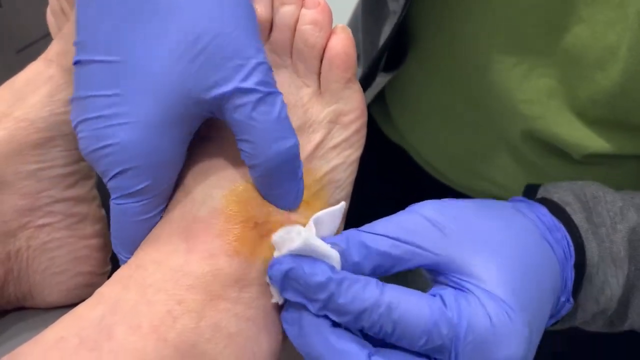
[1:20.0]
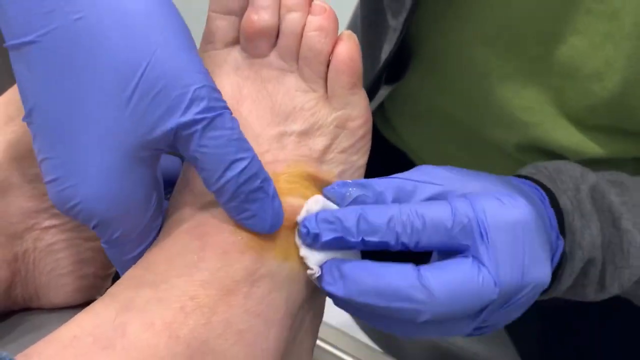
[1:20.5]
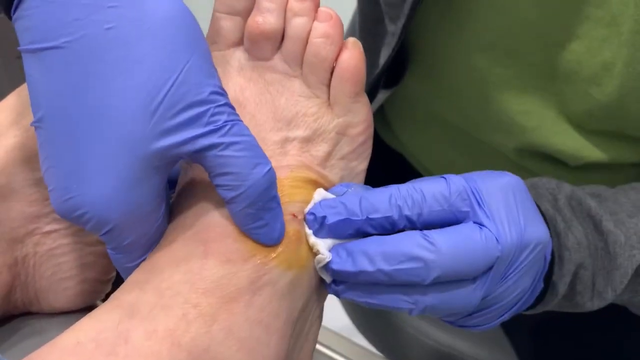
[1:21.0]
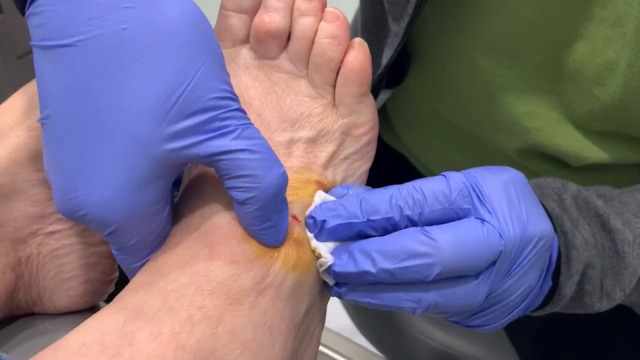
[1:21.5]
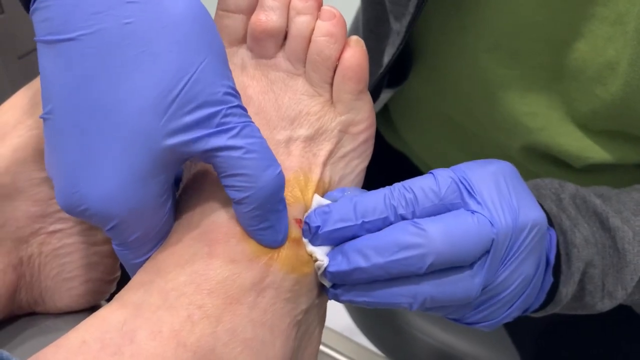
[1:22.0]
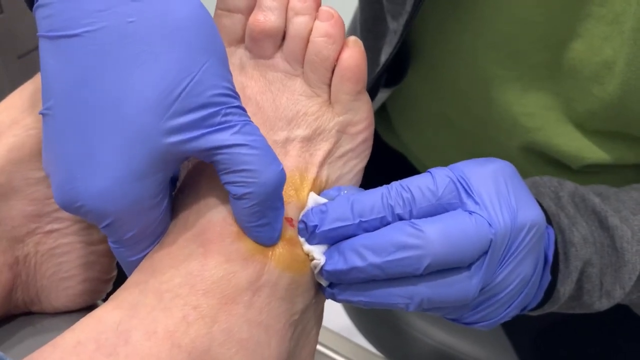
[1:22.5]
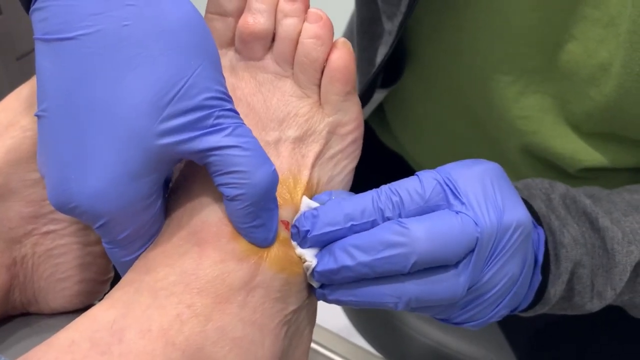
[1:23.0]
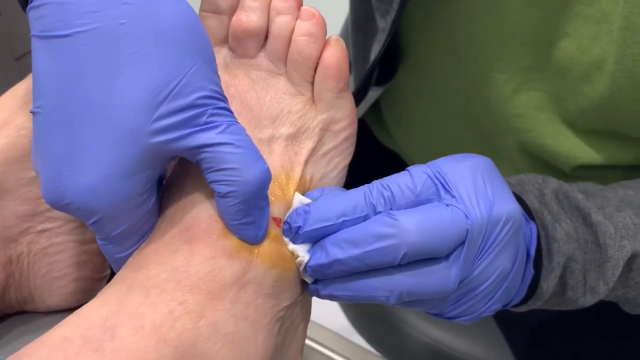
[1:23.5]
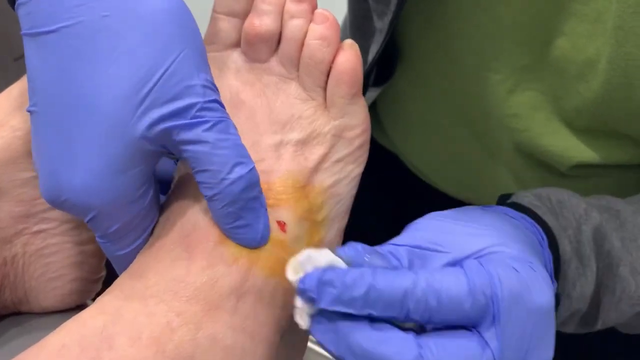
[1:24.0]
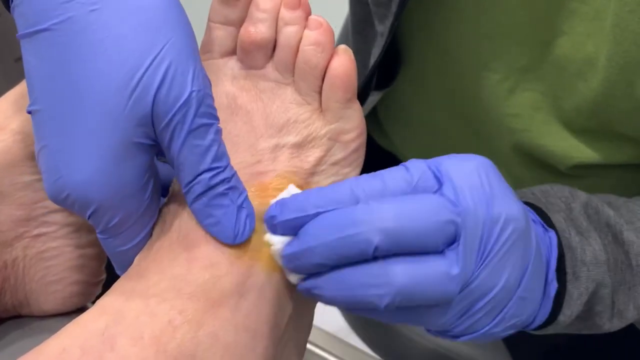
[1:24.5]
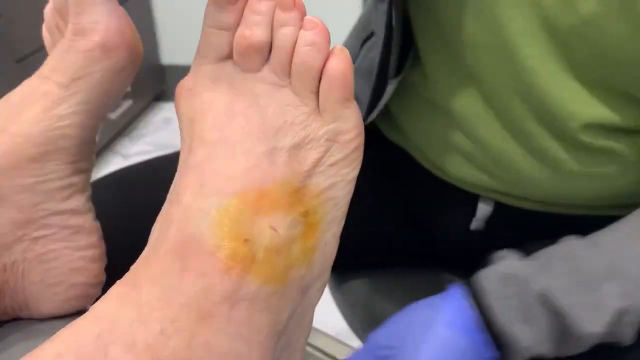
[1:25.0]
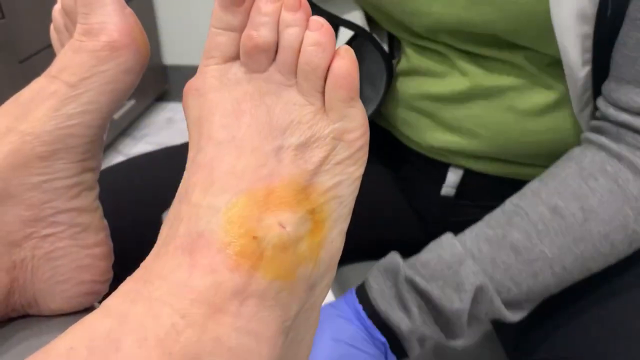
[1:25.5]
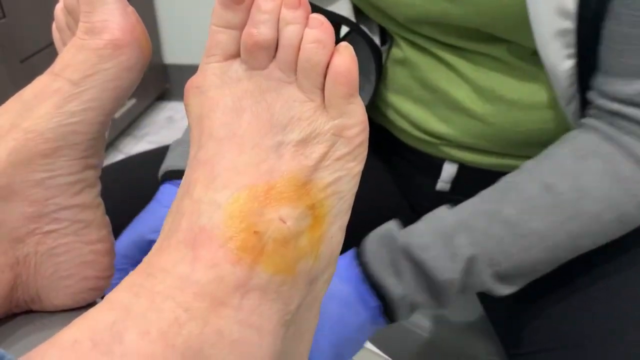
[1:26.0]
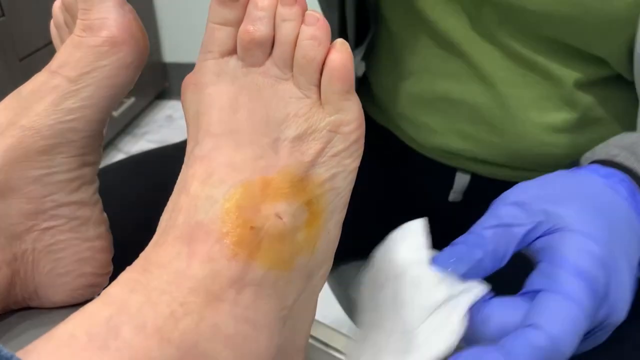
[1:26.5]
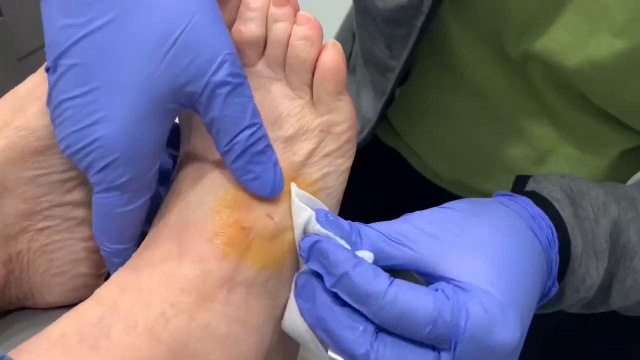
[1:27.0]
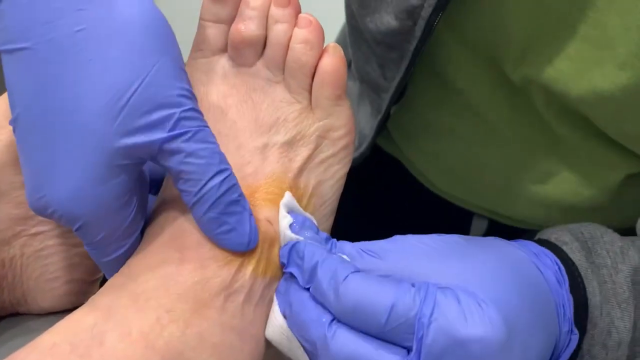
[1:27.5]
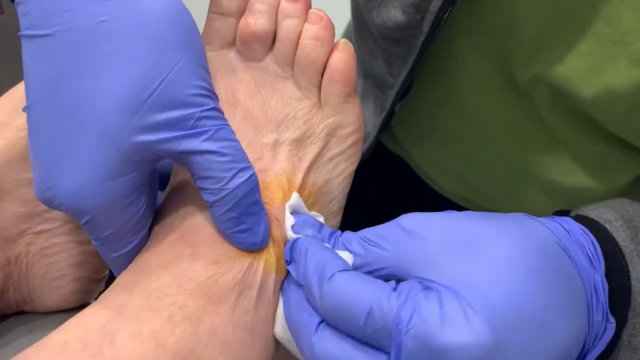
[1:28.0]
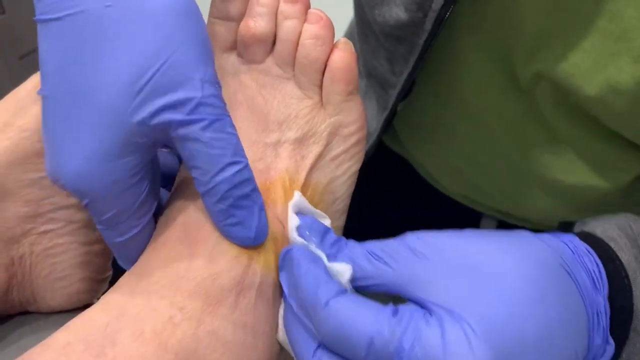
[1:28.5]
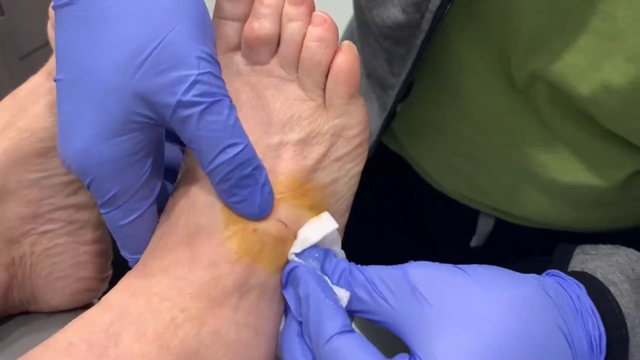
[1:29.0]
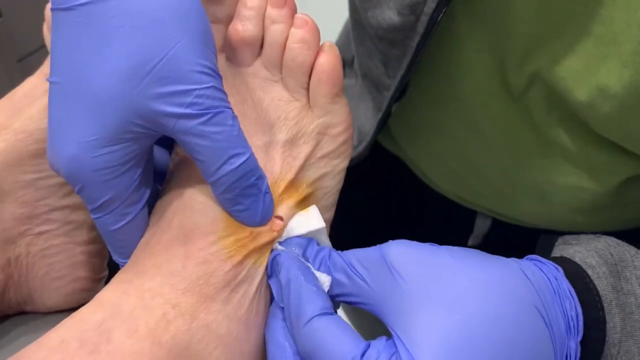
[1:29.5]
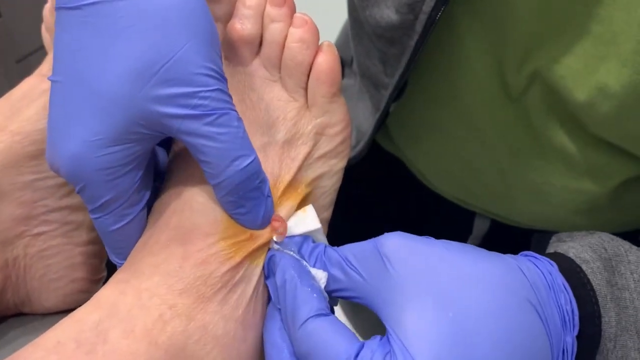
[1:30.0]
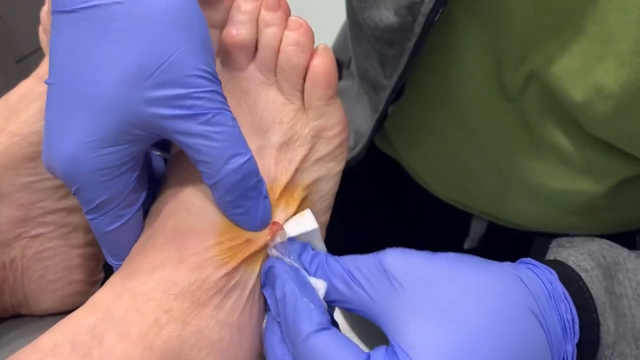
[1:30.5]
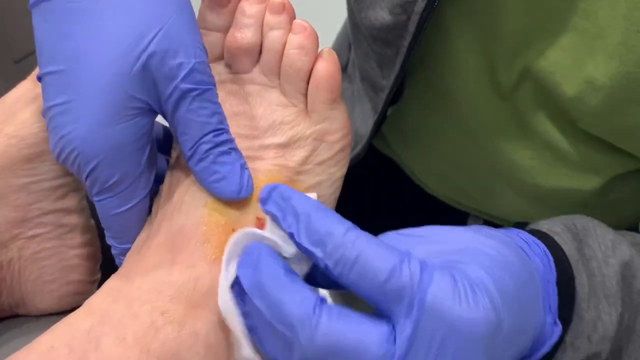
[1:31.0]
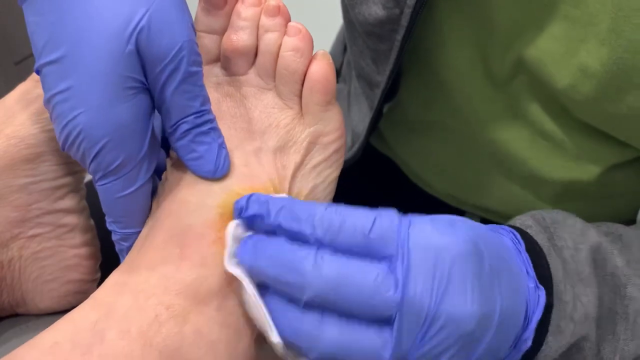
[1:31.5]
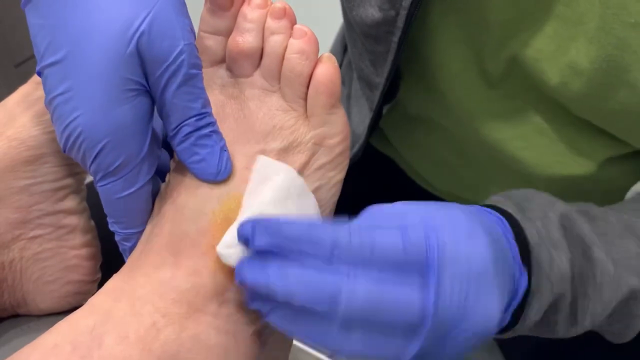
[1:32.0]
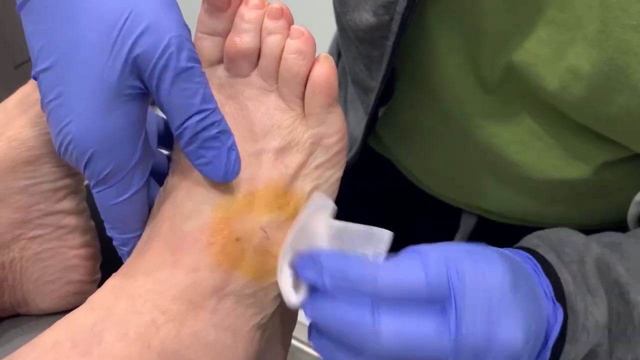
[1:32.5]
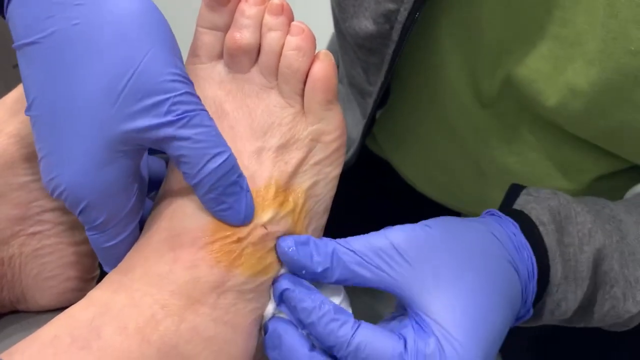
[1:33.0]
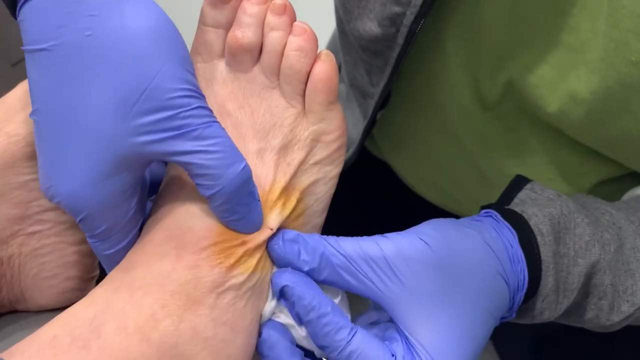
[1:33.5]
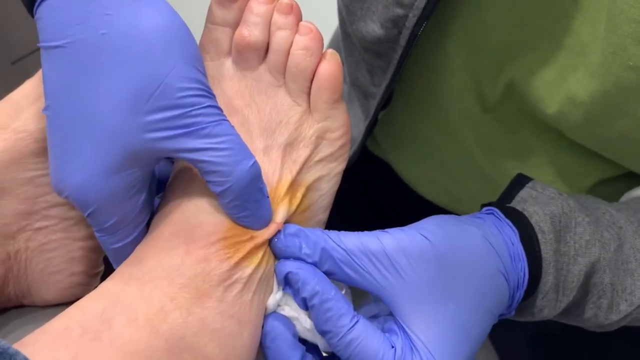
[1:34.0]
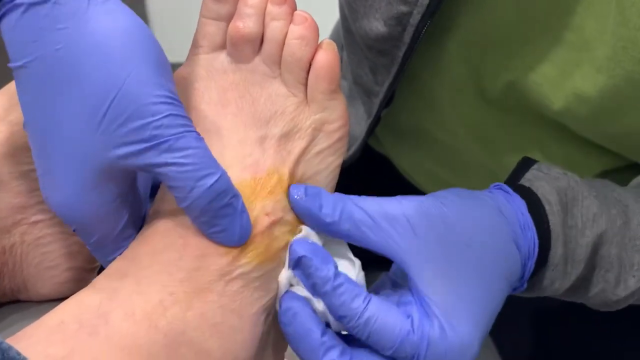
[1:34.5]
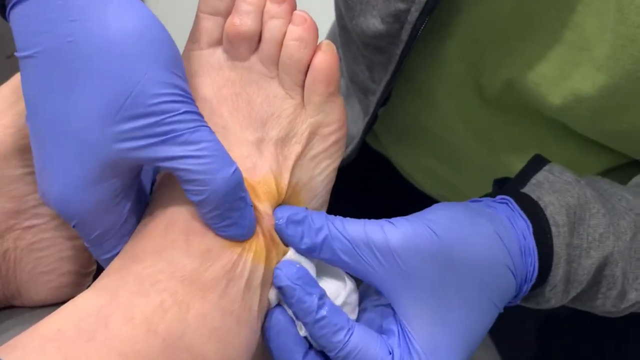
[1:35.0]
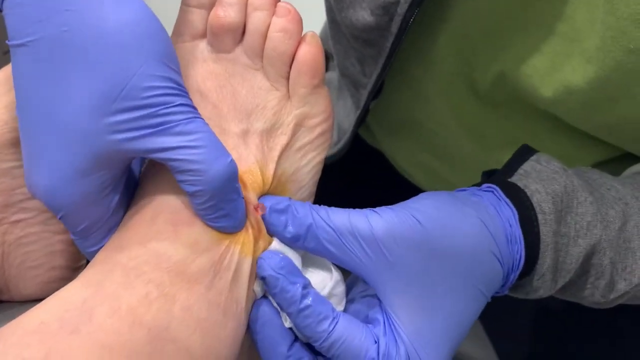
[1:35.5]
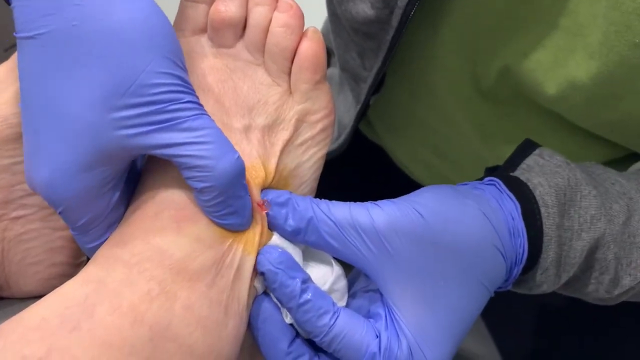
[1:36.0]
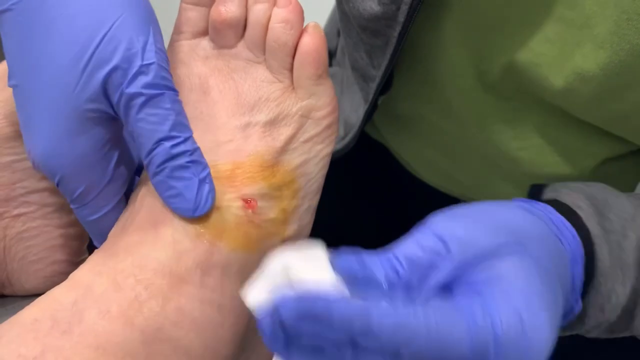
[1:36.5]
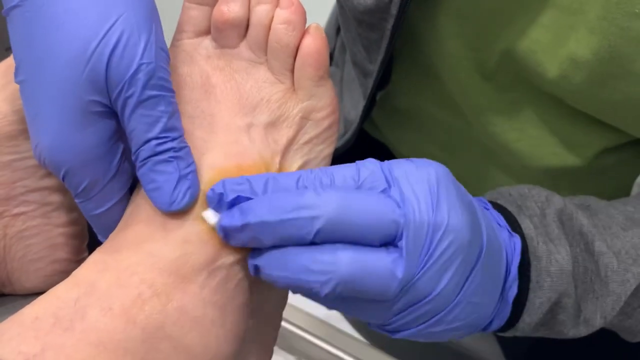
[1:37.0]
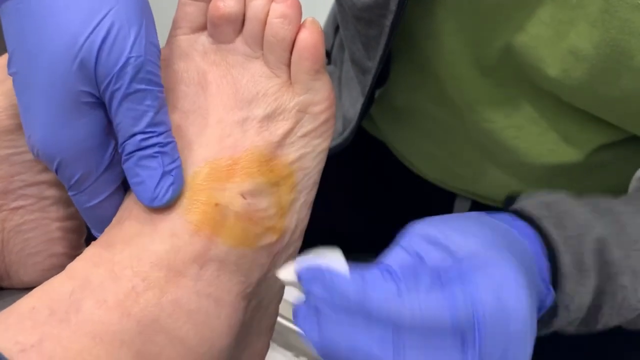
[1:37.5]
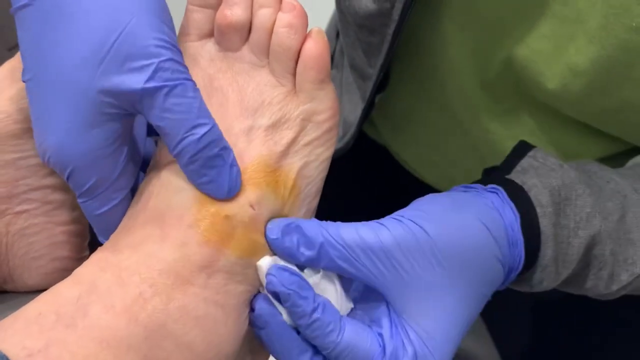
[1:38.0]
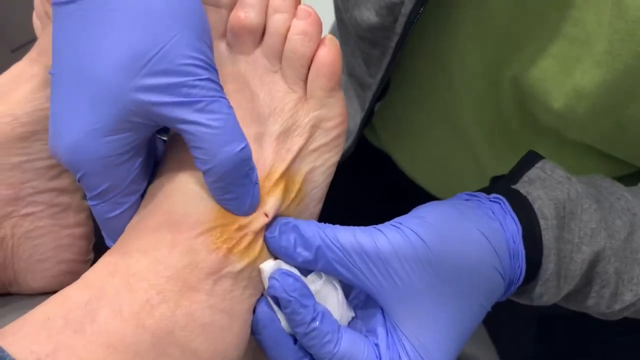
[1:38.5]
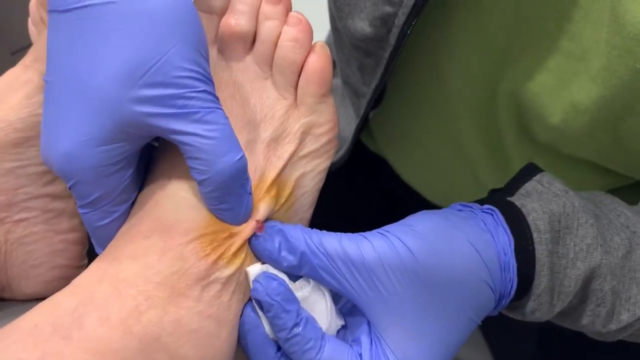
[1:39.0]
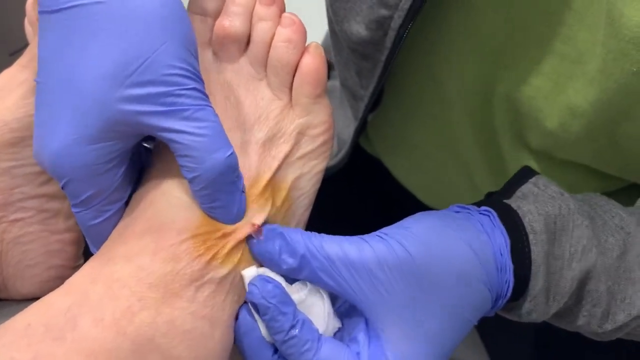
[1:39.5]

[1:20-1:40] There is a wart-like condition on the top of the patient's foot. Wearing gloves, the podiatrist uses a napkin to take material from the top of the foot. Both the patient and the podiatrist are Caucasian.